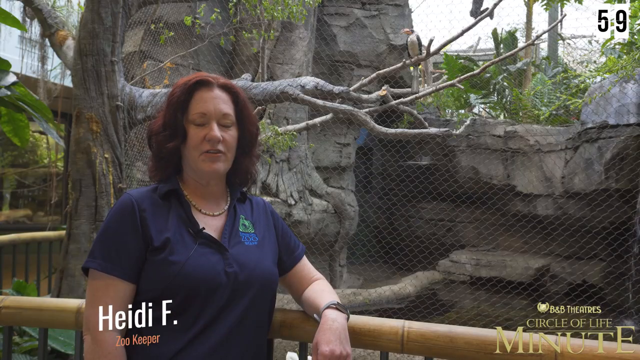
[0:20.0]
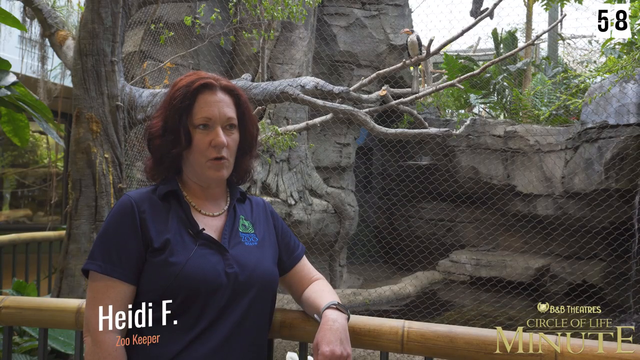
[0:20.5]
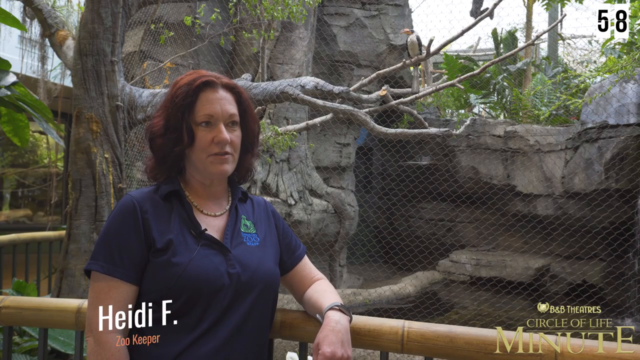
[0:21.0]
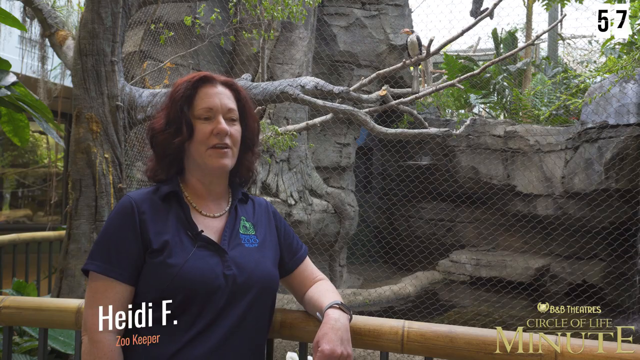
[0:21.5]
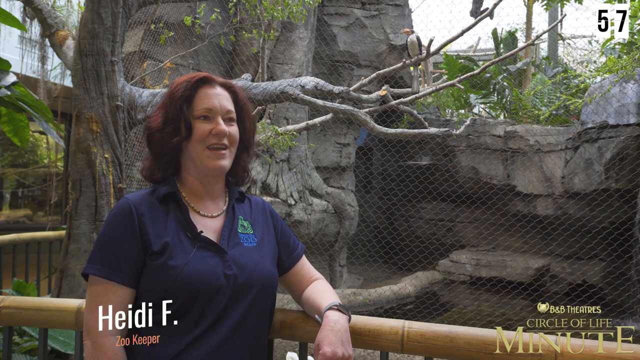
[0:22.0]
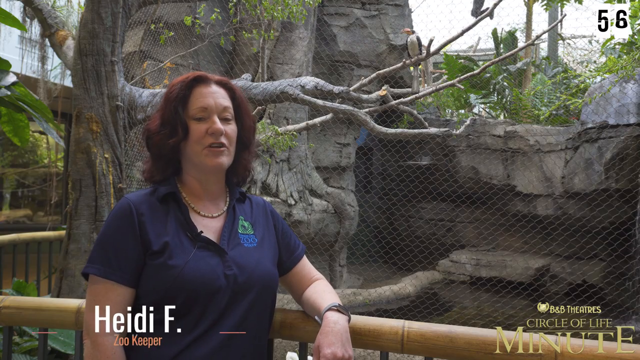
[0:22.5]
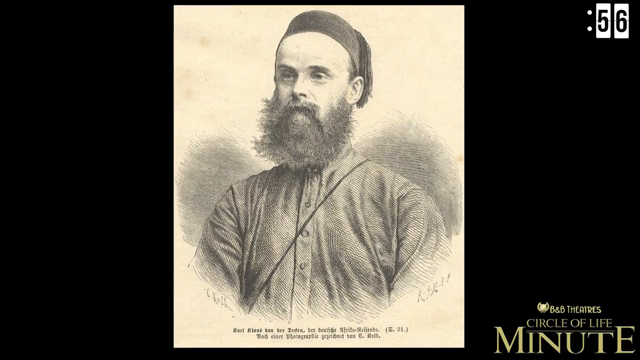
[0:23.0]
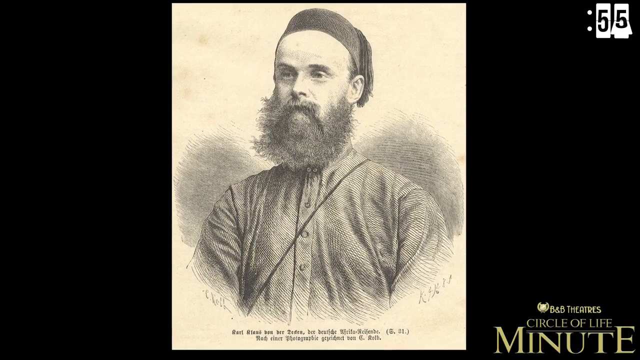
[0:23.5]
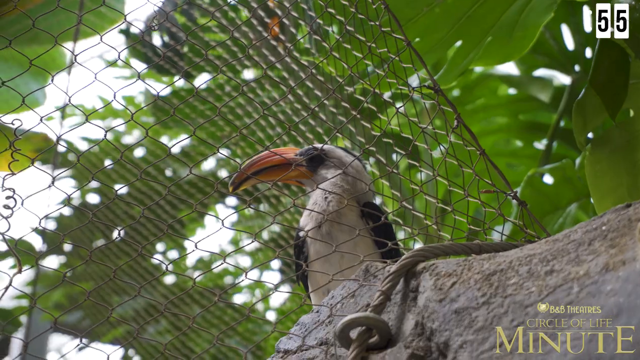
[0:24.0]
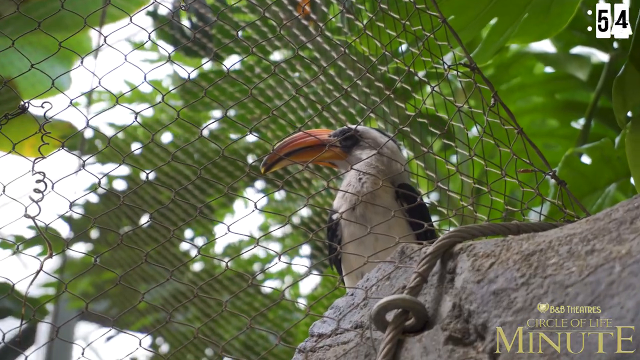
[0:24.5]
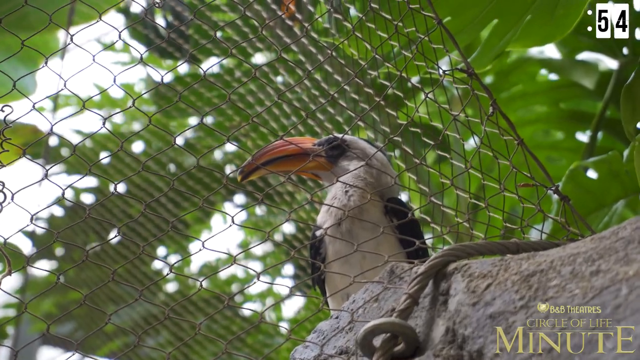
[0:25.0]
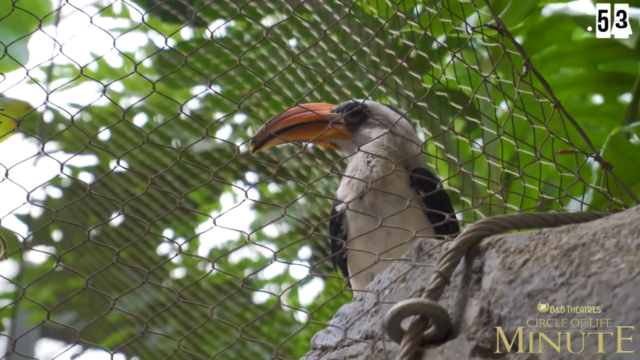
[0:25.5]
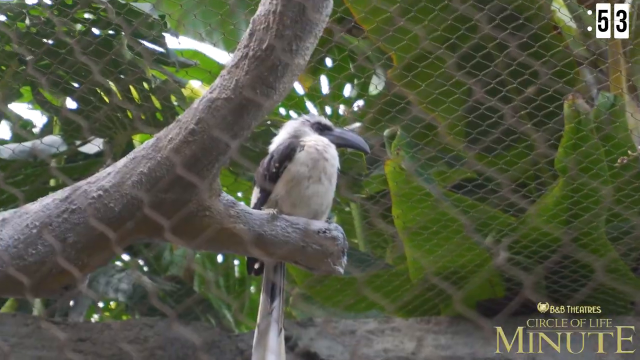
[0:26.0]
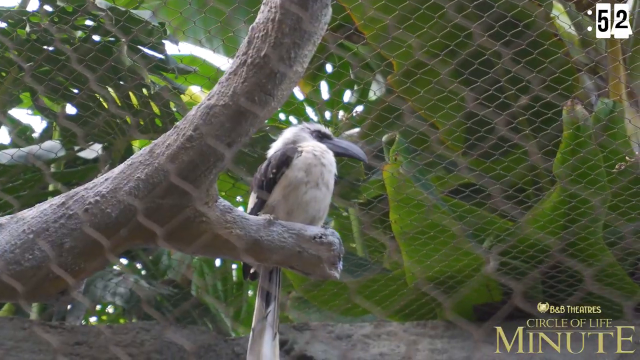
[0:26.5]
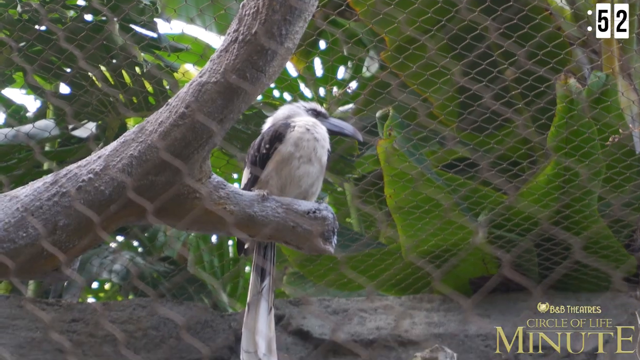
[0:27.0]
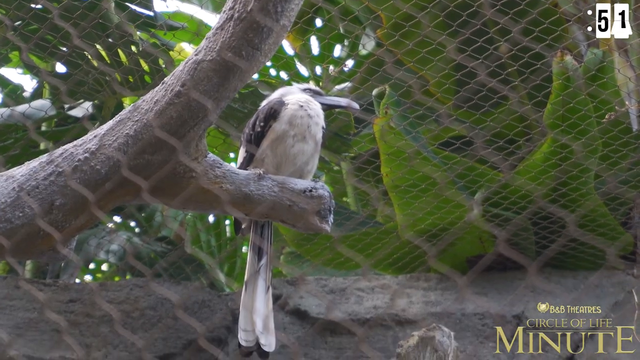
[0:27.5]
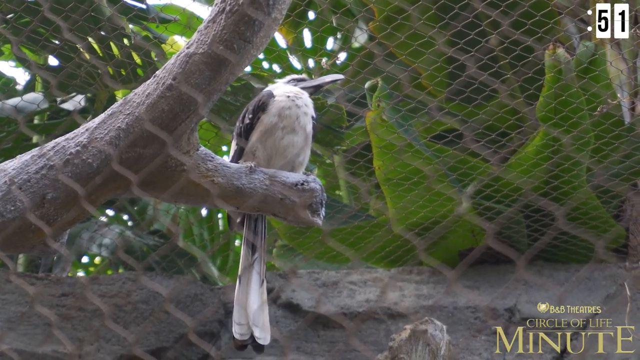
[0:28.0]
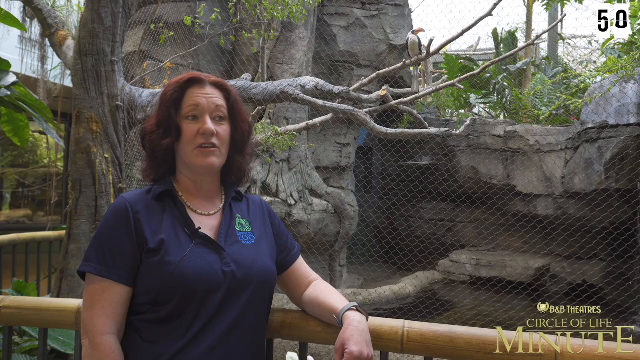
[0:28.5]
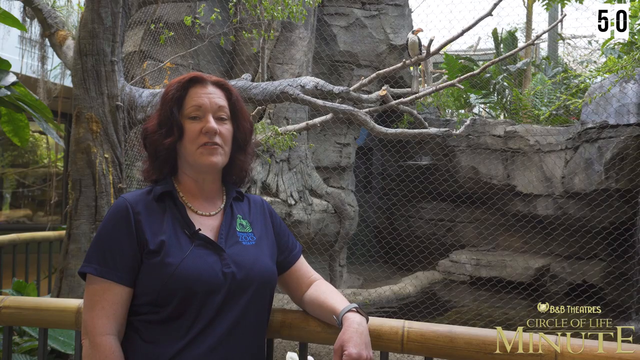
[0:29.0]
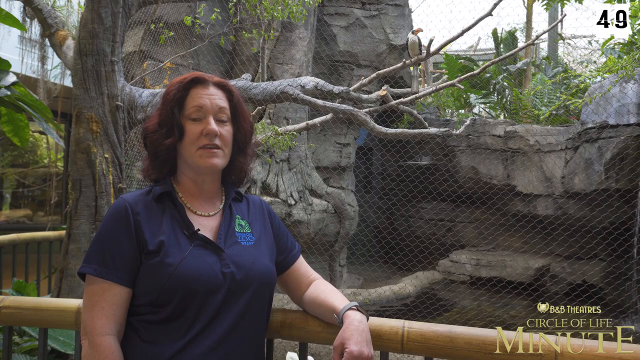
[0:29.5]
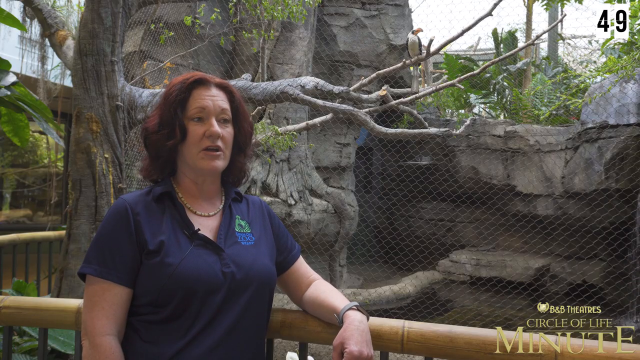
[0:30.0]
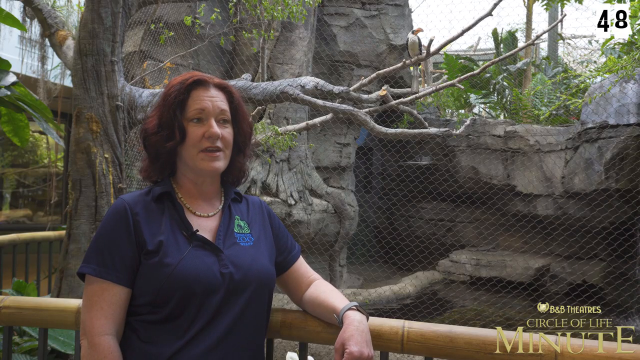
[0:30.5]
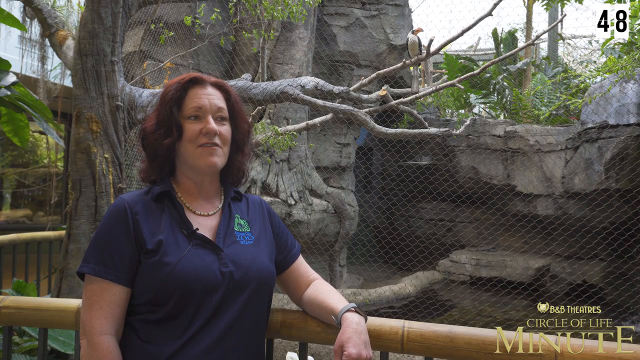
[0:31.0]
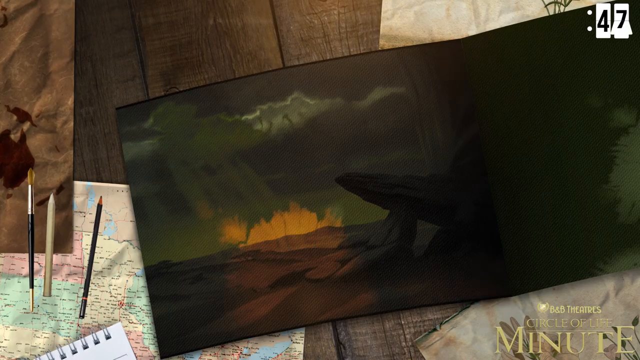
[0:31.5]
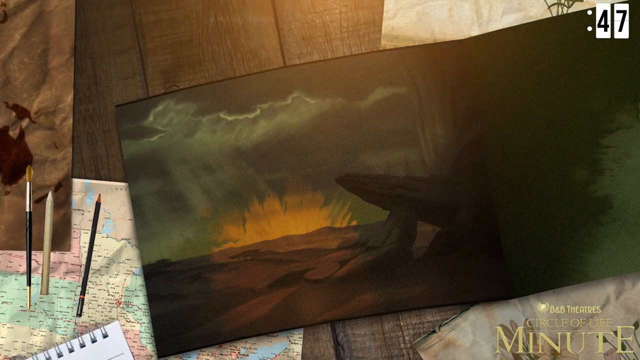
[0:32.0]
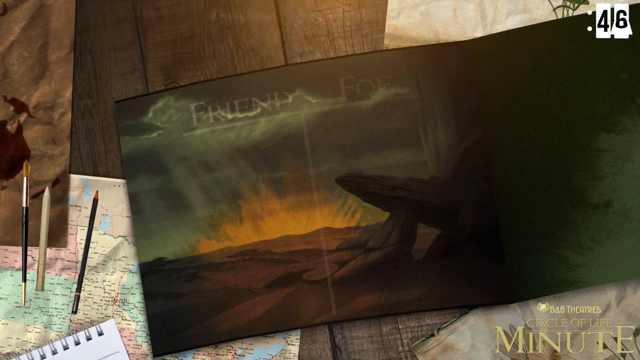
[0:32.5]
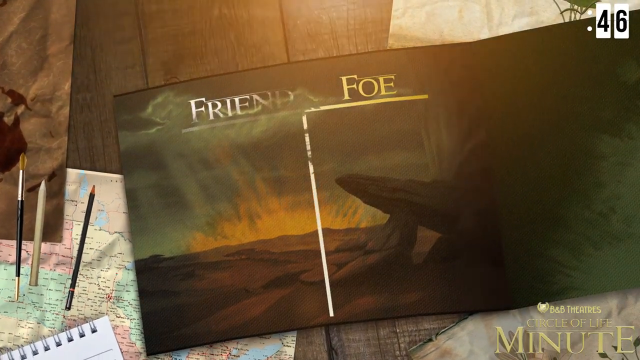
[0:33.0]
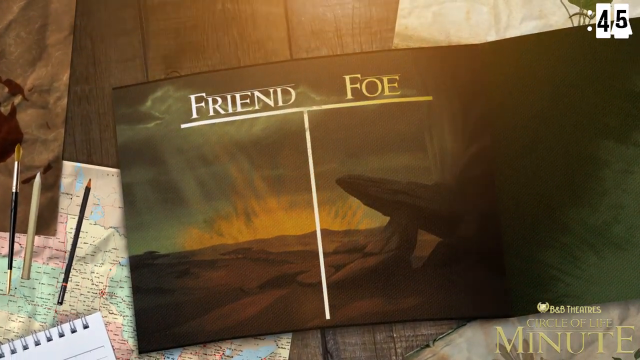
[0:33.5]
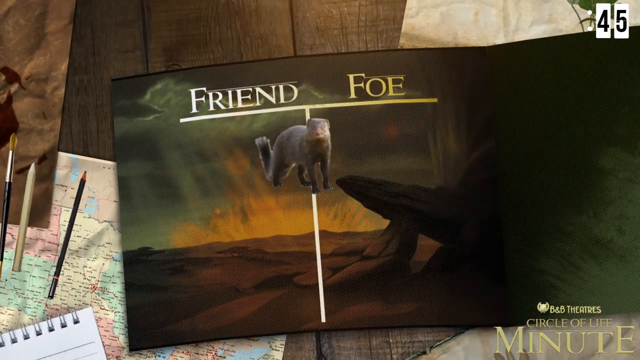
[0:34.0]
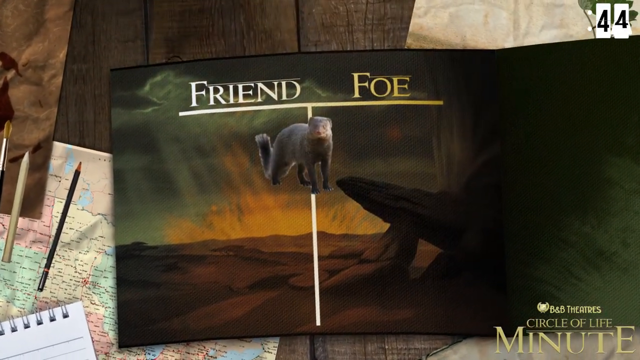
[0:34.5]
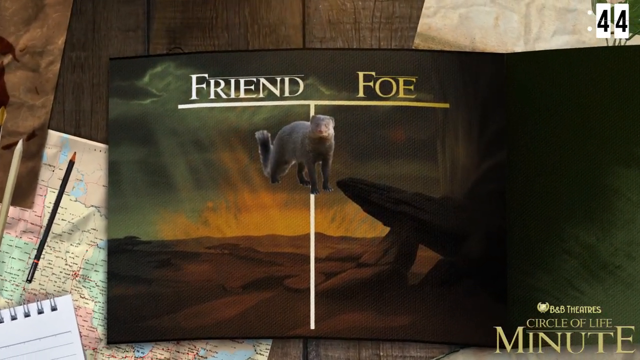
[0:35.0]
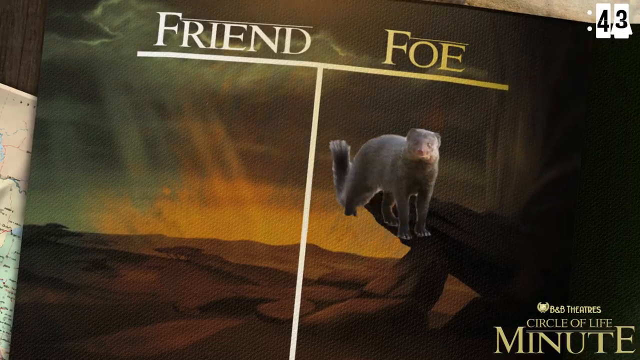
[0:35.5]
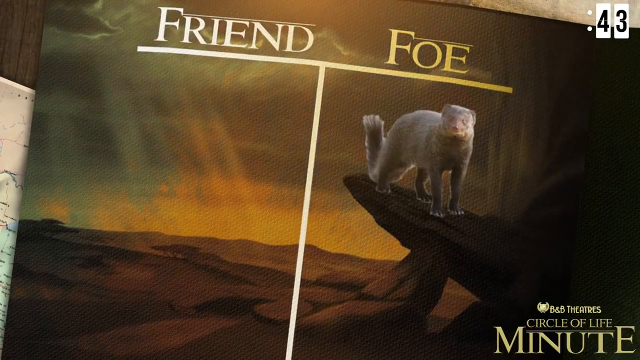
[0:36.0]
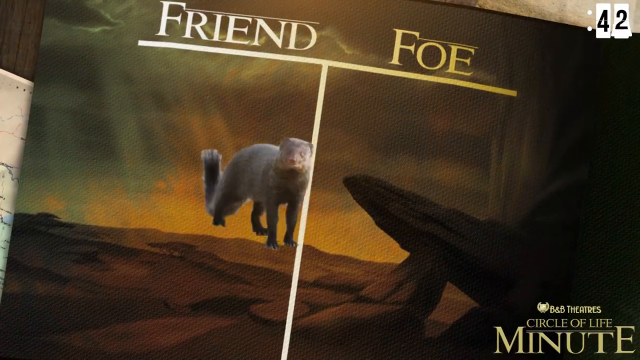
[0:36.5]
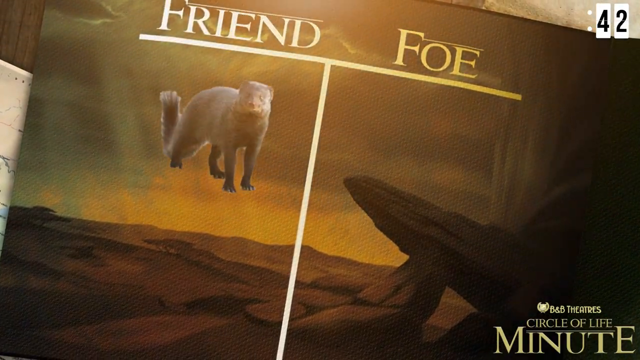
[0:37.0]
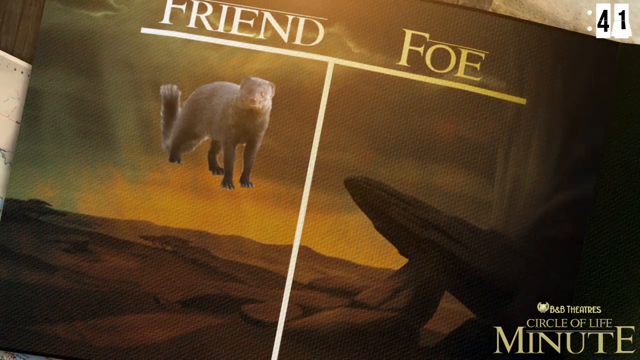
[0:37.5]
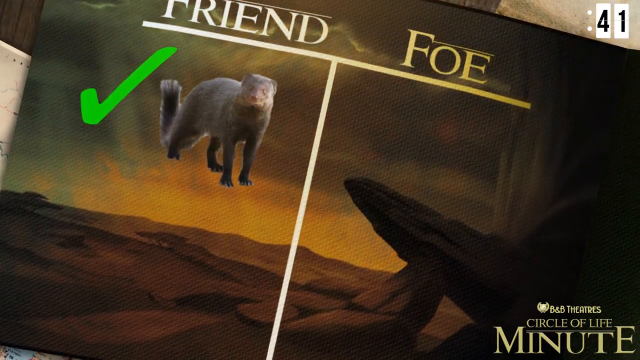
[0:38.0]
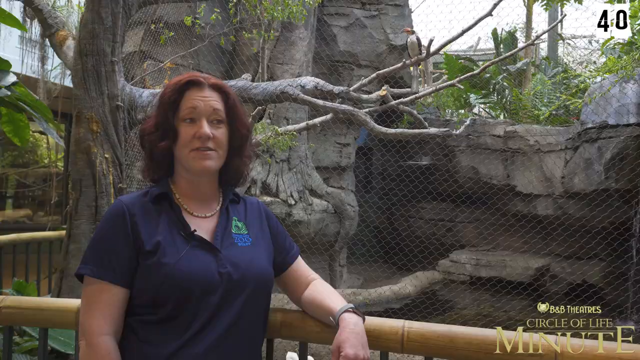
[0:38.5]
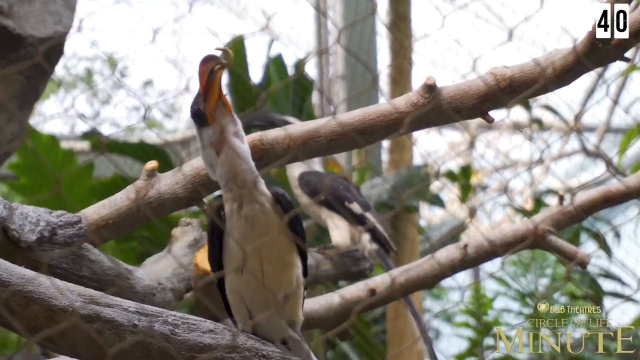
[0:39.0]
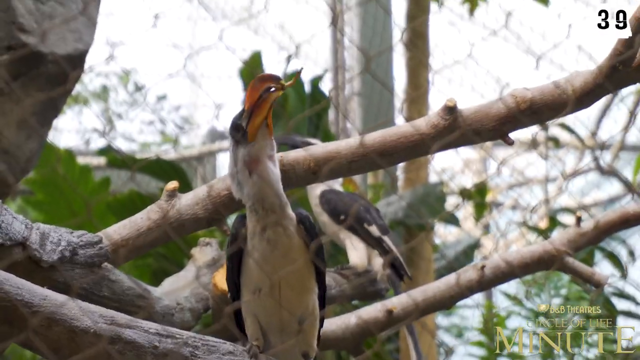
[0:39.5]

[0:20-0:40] A white middle-aged woman with shoulder-length red hair, wearing a purple polo shirt, appears, and a caption identifies her as Heidi F, a zookeeper. As she speaks to the camera, the background behind her shows a large tree and rocky formations with wiring over them so the animals cannot escape. The video cuts to a picture, a drawing of a man with a beard. Behind the wiring is a white and black bird with a long orange beak. Another shot shows a different bird on a tree branch with a long feather on what seems to be its back, a white belly, black wings and a black beak. The video cuts back to Heidi F as she continues to speak, and then an animation reads "friend or foe" as a small animal is moved into the friend category.